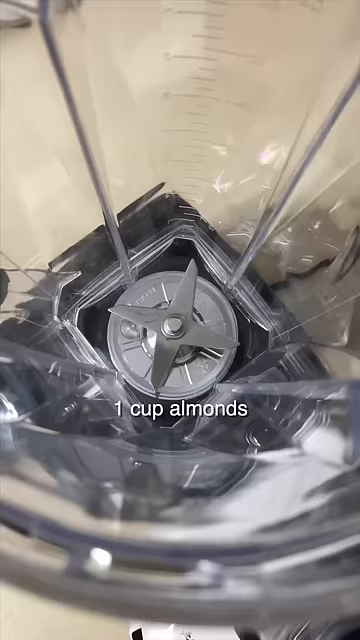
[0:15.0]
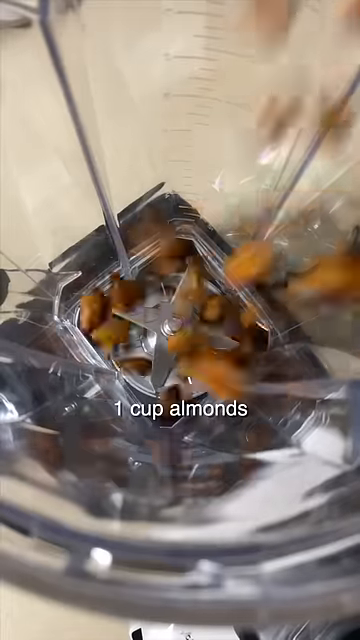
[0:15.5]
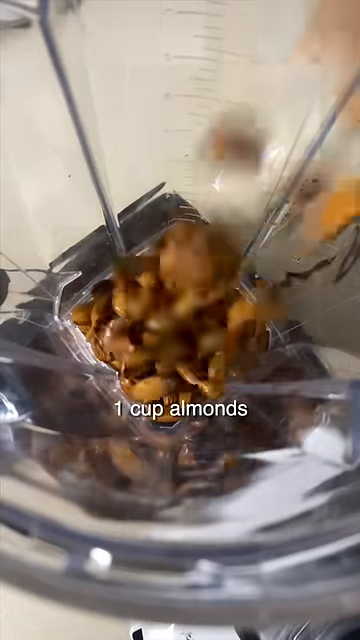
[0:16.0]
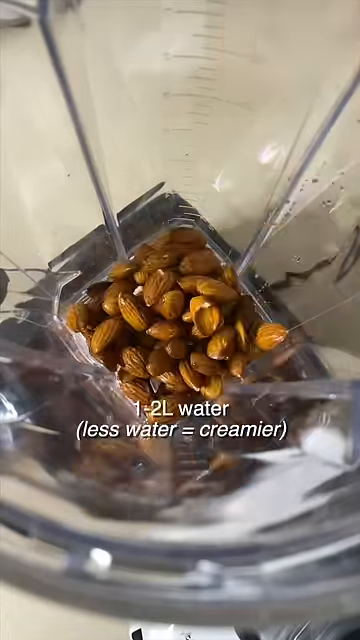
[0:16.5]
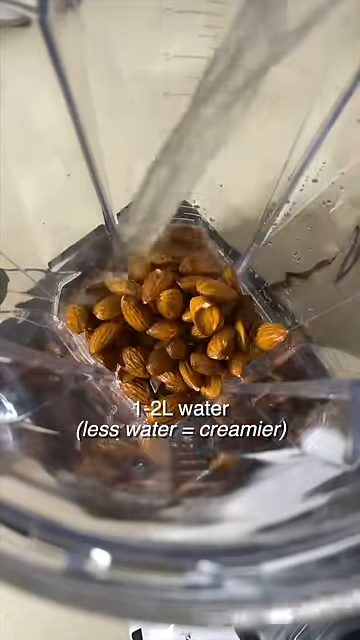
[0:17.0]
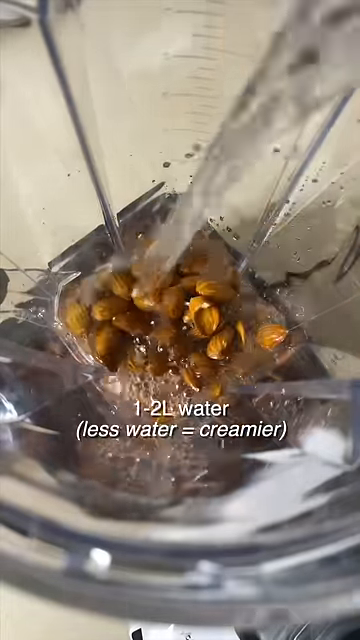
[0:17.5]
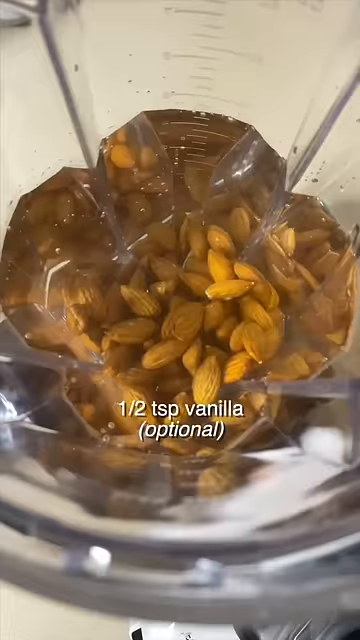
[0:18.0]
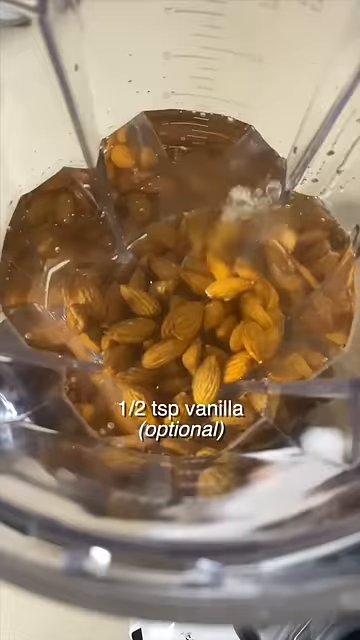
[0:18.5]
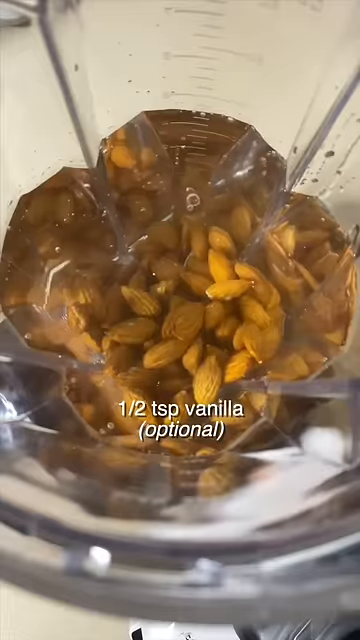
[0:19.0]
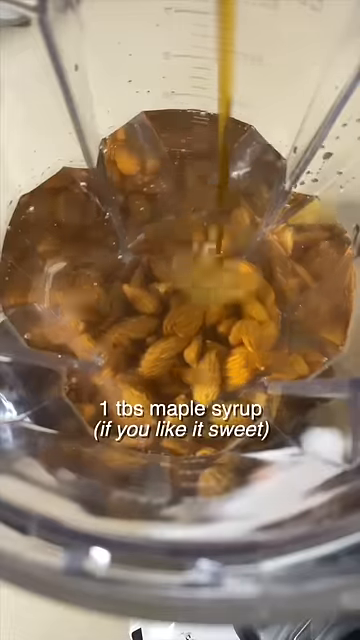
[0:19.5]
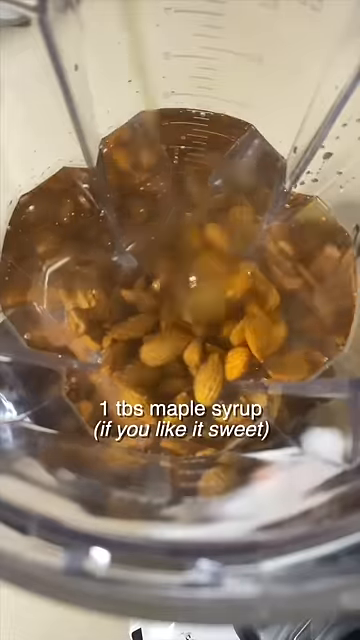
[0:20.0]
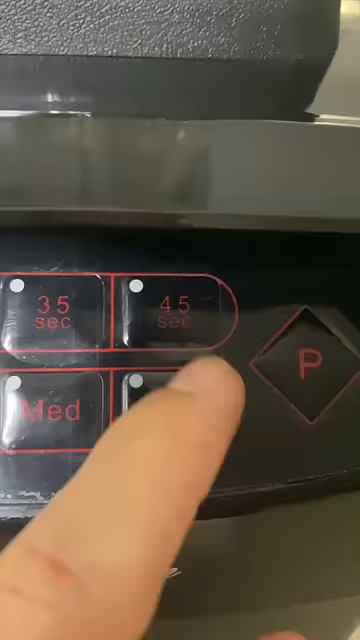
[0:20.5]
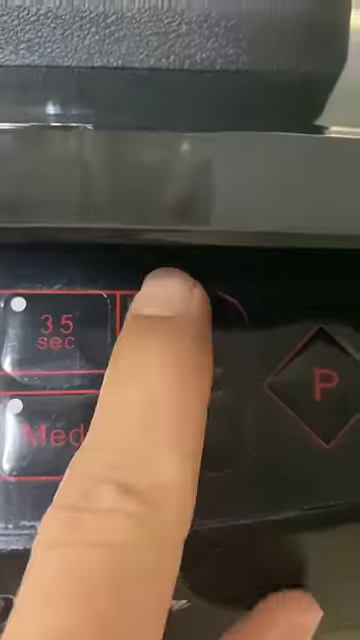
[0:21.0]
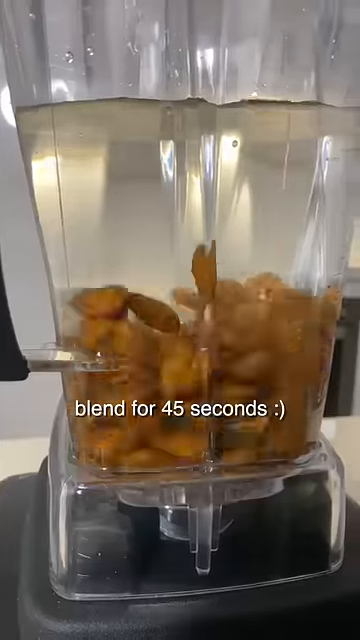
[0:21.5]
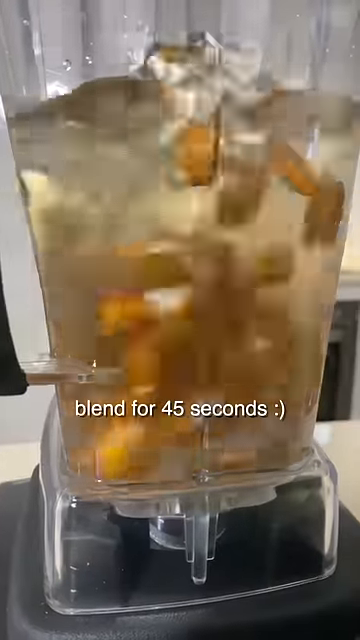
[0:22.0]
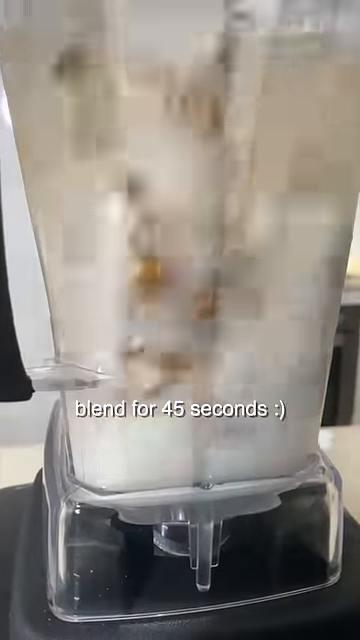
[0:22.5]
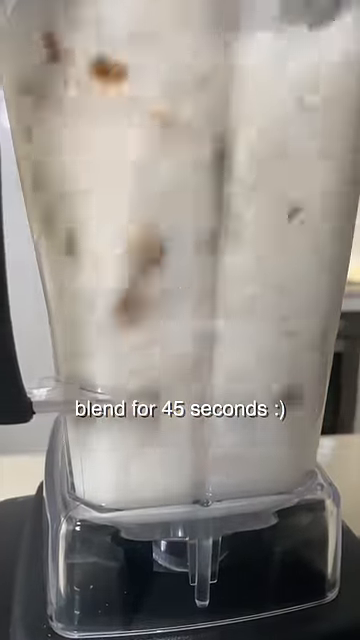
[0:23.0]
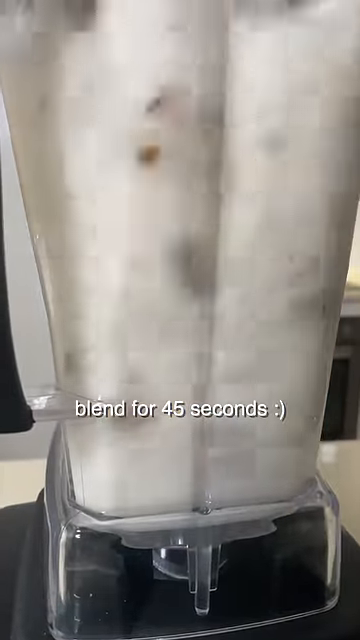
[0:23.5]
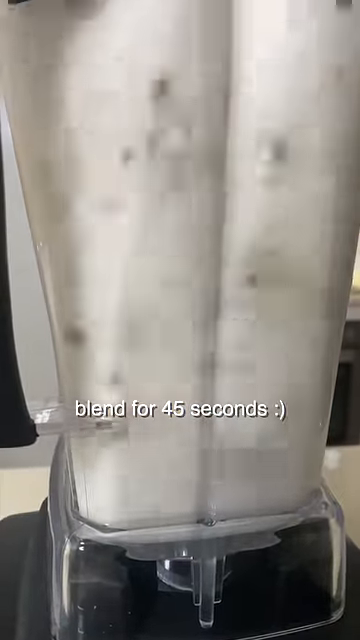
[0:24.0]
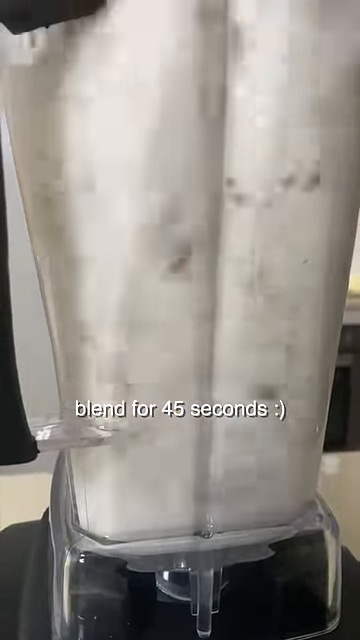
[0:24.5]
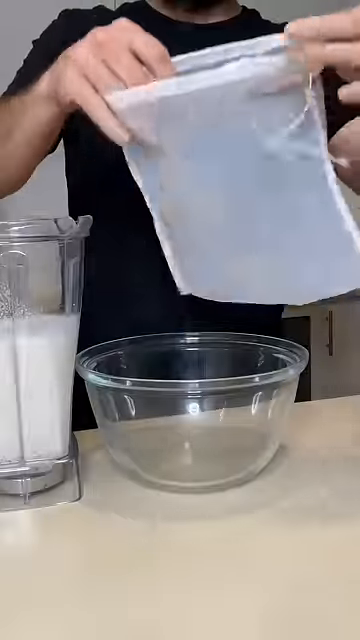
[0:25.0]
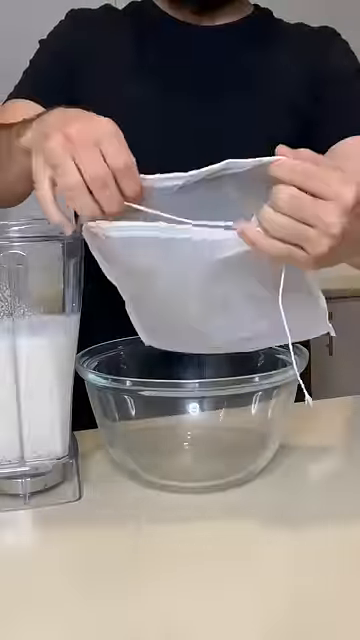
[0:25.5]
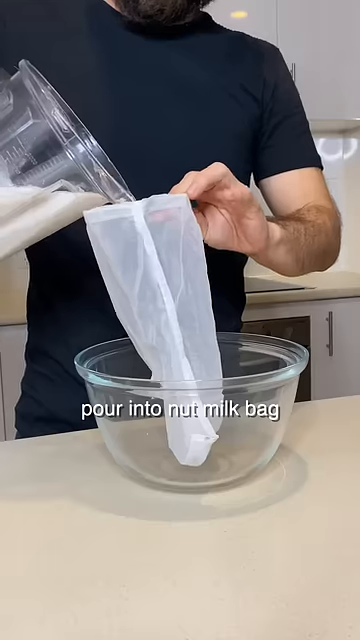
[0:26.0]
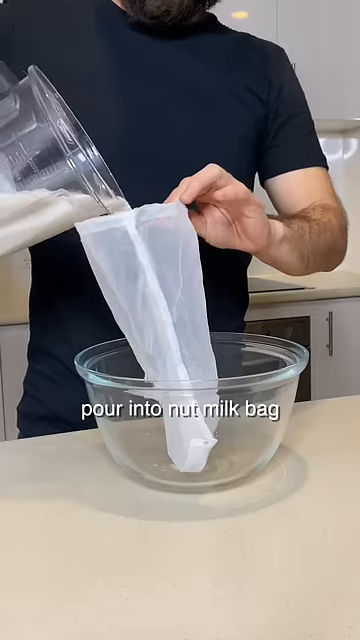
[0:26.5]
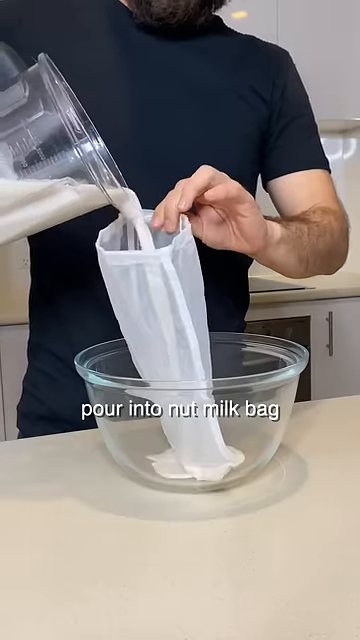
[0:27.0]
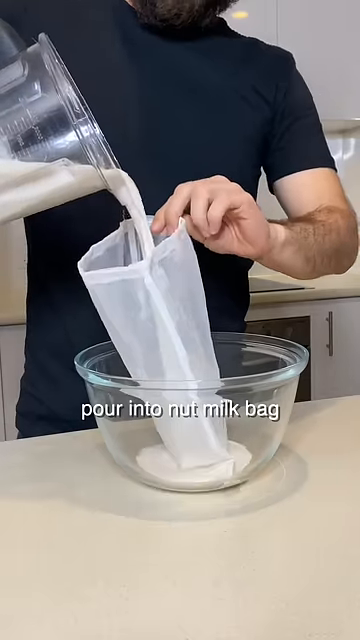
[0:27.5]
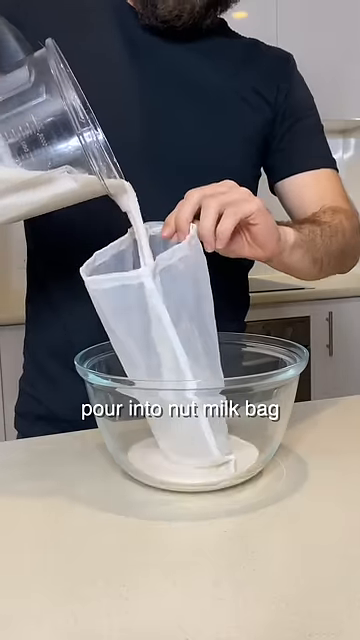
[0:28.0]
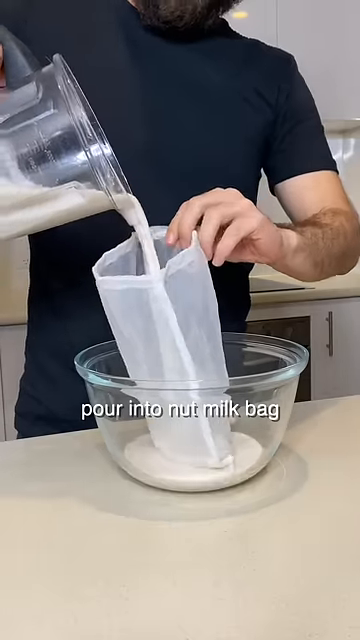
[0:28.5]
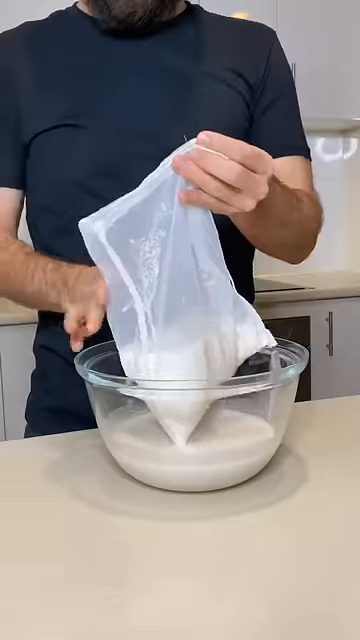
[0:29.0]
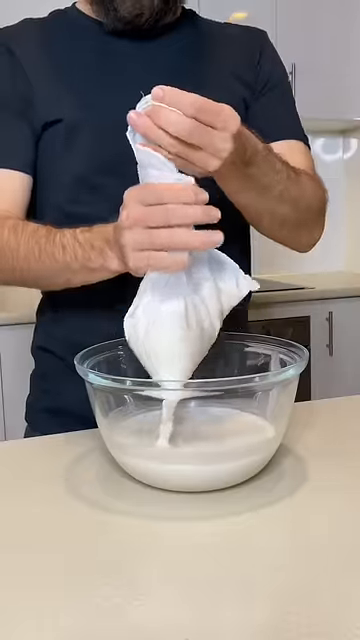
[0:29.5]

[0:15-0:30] After the water is poured off the soaked almonds, one cup of the soaked almonds goes into a blender along with 1 to 2 liters of water. Half to one teaspoon of vanilla is added for flavoring, with an optional teaspoon of maple syrup for sweetness. The blender runs for about 45 seconds to break the almonds apart, and the mixture is then poured into a nut bag to be squeezed.